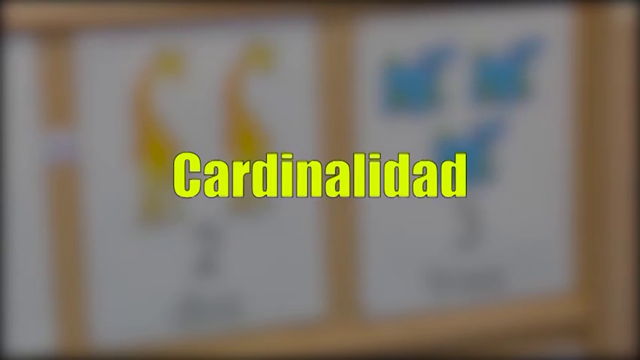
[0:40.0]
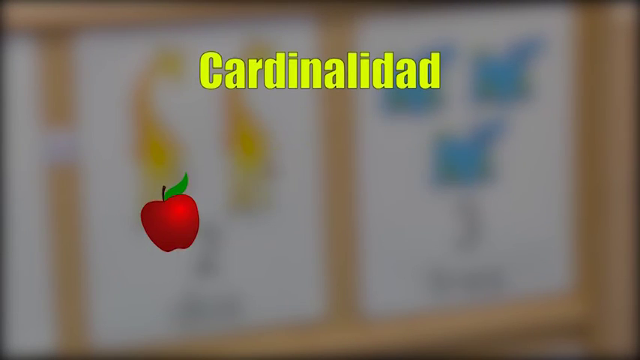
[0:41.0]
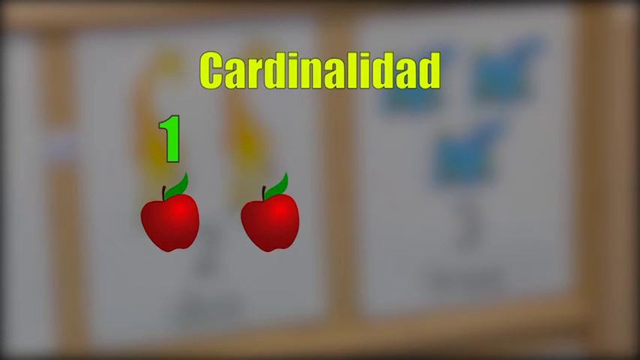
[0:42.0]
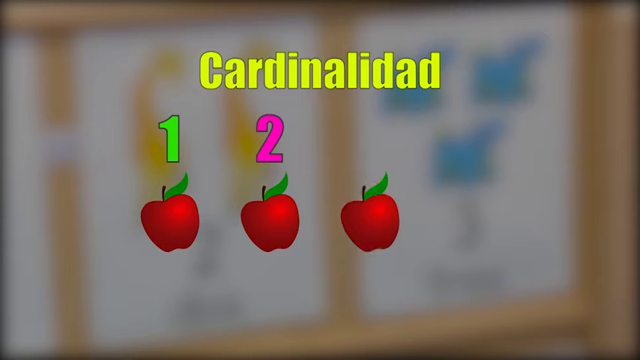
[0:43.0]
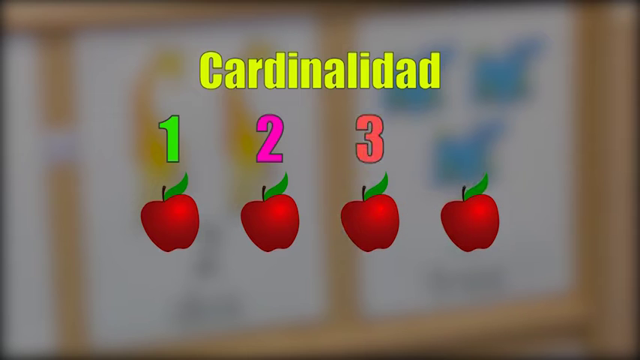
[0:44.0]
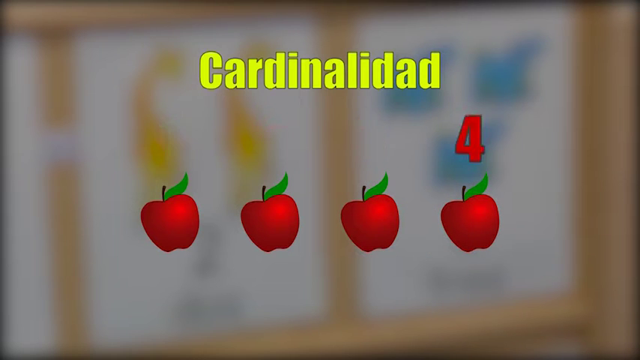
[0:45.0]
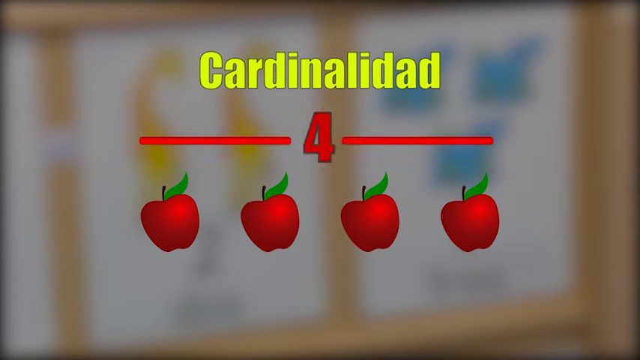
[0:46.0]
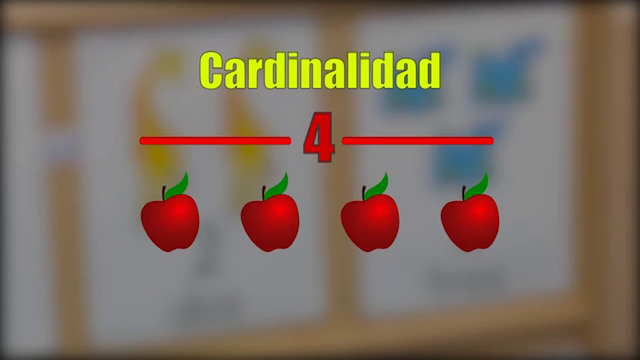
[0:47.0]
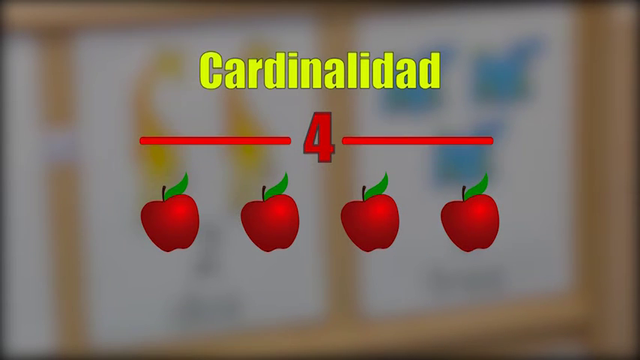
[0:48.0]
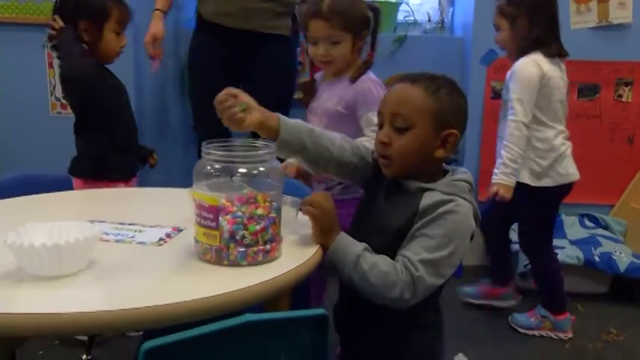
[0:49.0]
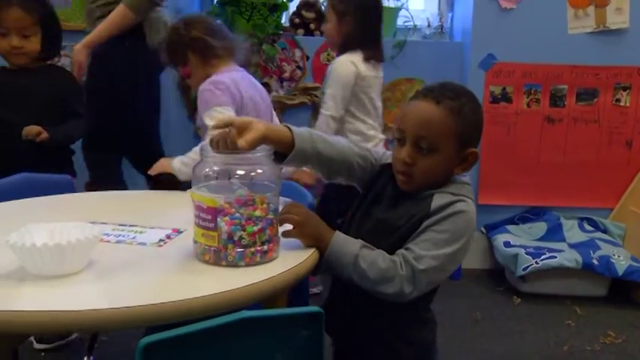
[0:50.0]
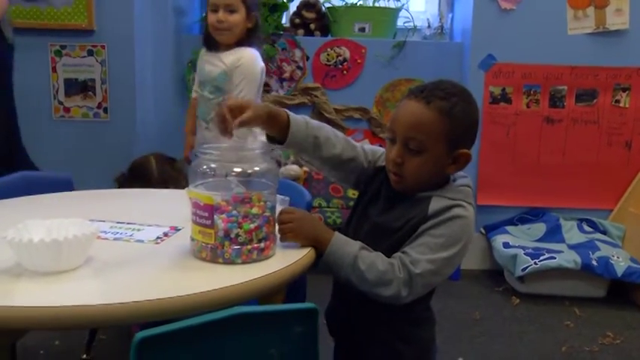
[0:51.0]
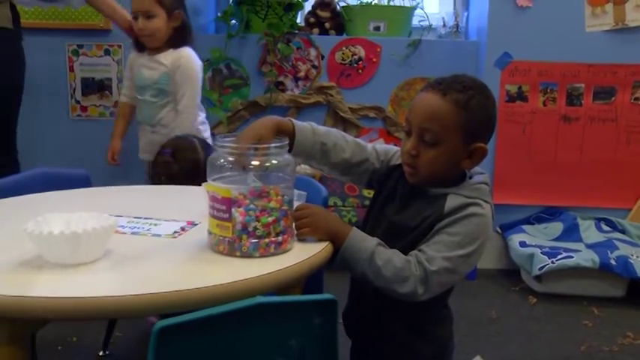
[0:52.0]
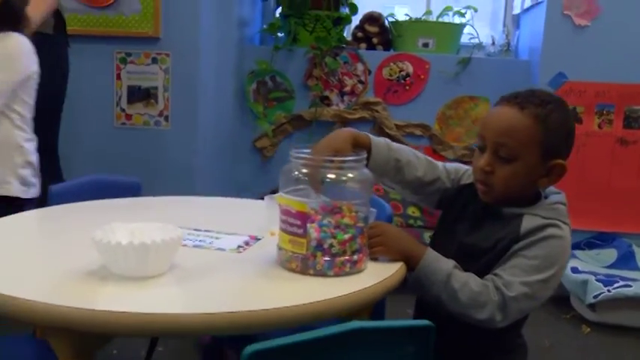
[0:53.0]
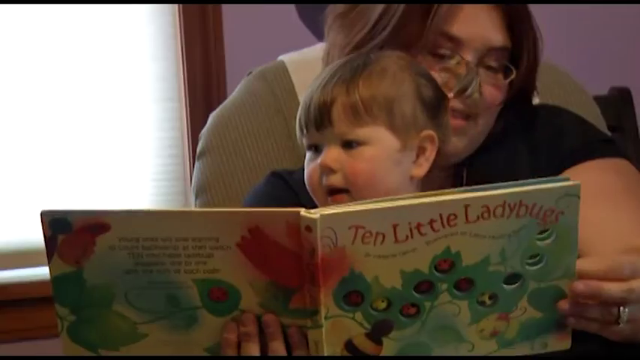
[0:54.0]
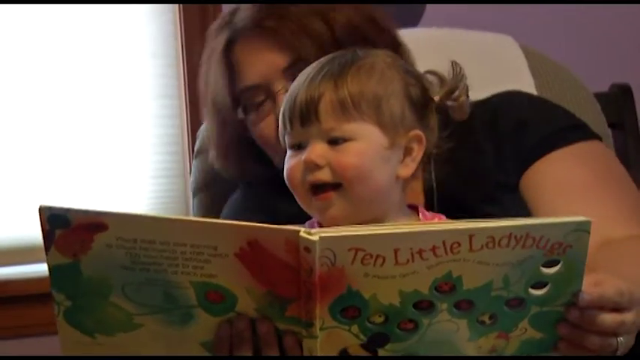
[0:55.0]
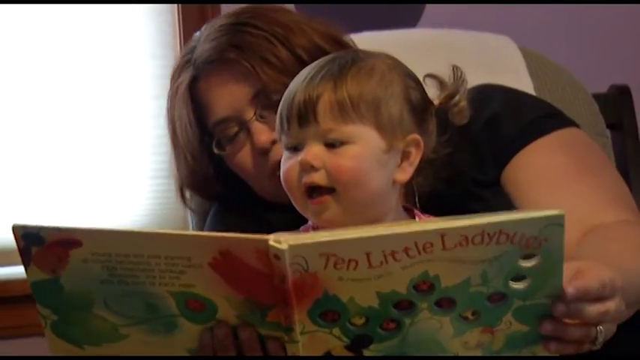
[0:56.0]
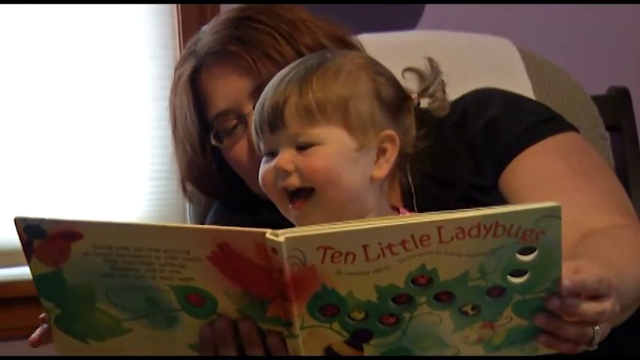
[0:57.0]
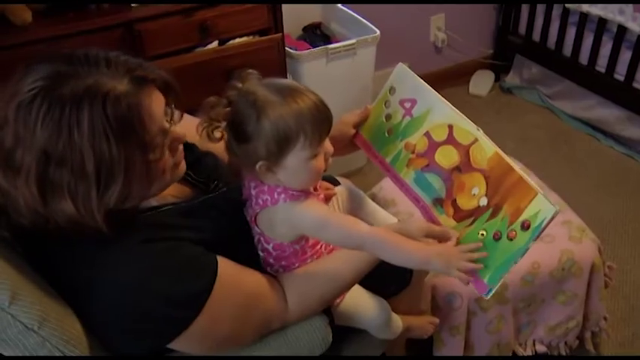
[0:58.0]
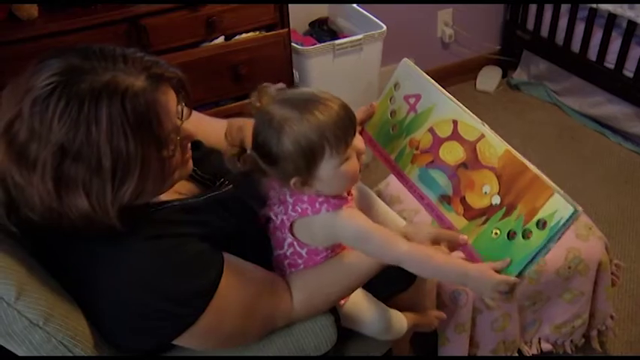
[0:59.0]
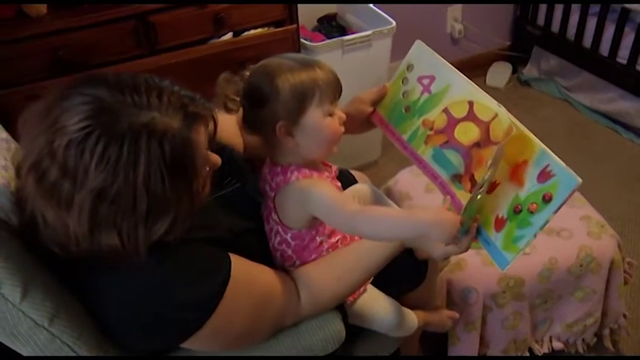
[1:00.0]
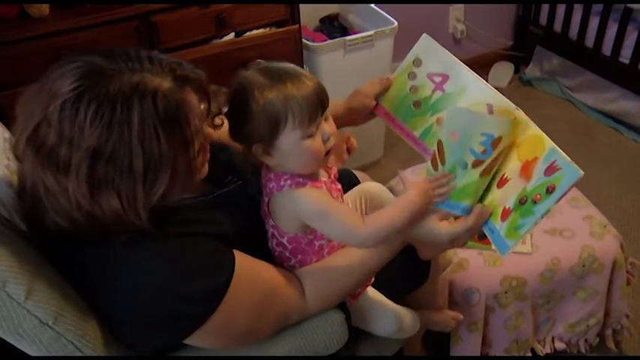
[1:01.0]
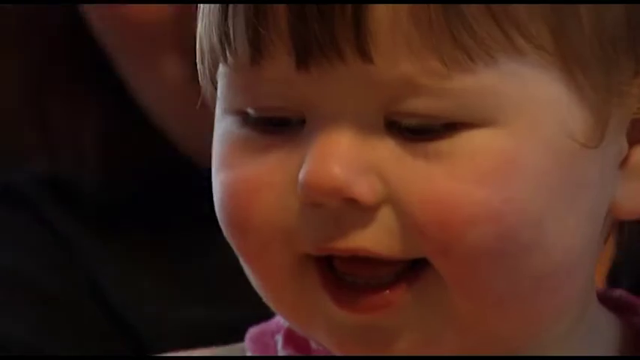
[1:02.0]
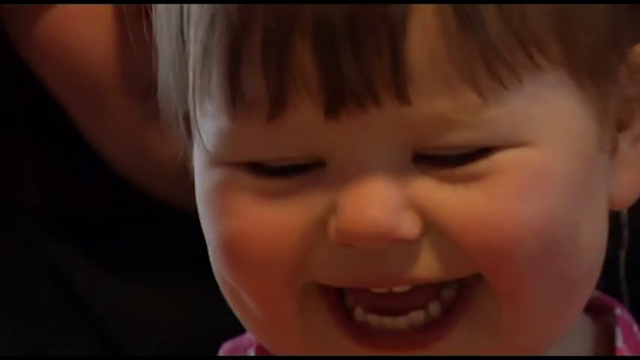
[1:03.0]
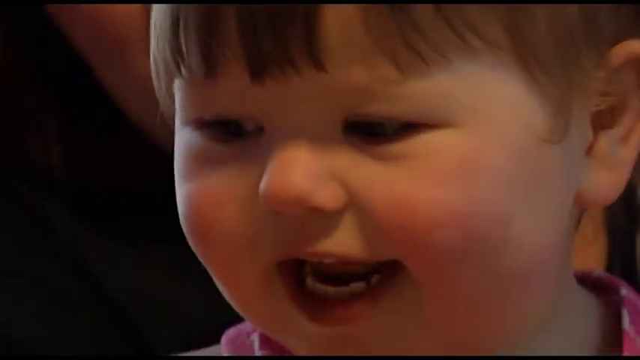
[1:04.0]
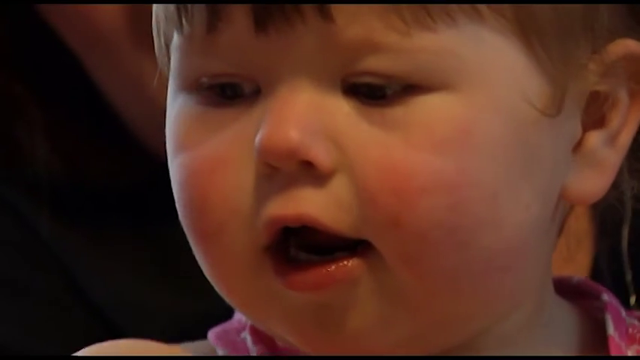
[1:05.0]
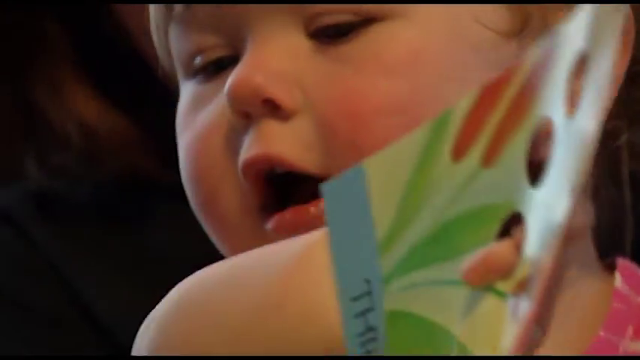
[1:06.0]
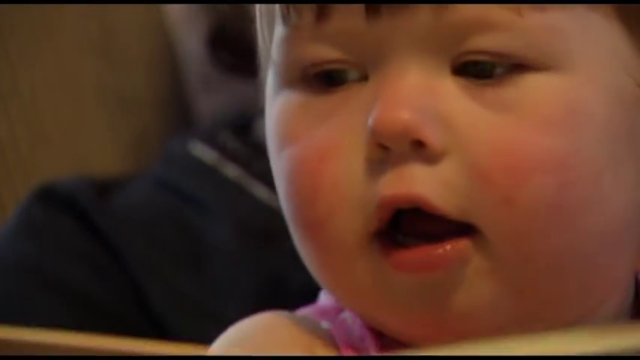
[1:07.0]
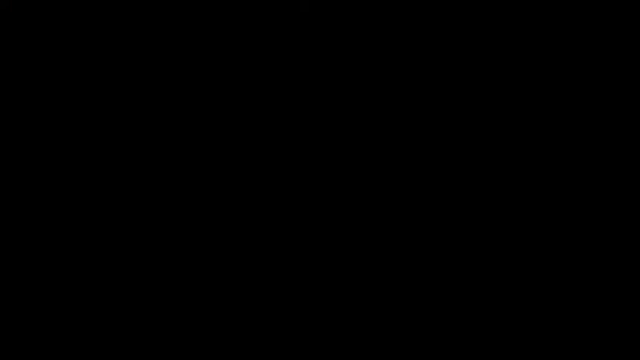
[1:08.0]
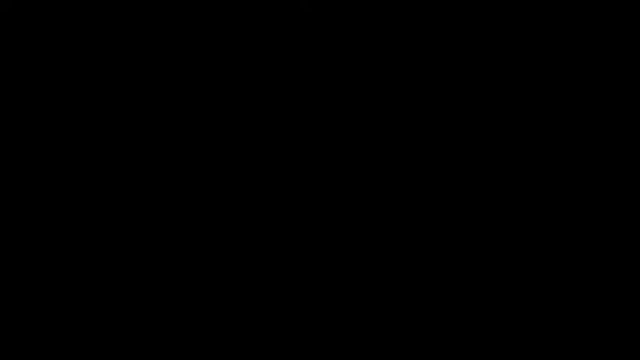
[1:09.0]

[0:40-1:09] Images of the book's cards, showing an elephant, two giraffes and so on, are on screen when the text "Cardinality" appears and the whole background image becomes blurred. Four apples then appear and are numbered from 1 to 4. All the numbers disappear except the 4, which is centered with two red lines on its sides, possibly indicating that there are four apples. Next, a boy with dark skin puts his hand into a jar that seems to be full of sweets or toys, perhaps in a classroom or a children's day care center. More images show women reading stories to children; in one, a woman, possibly the girl's mother, reads with a girl who smiles while she turns the page and reads the content.